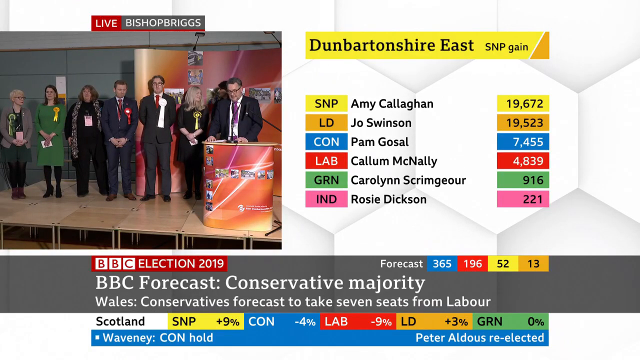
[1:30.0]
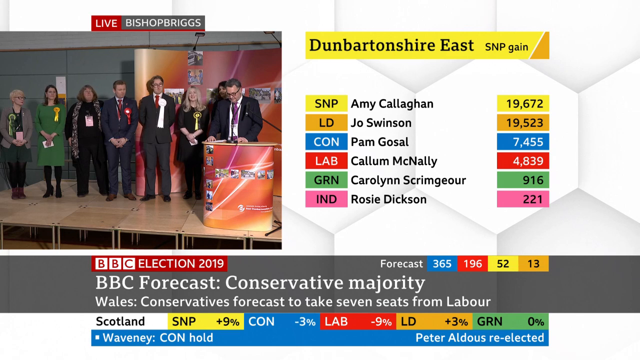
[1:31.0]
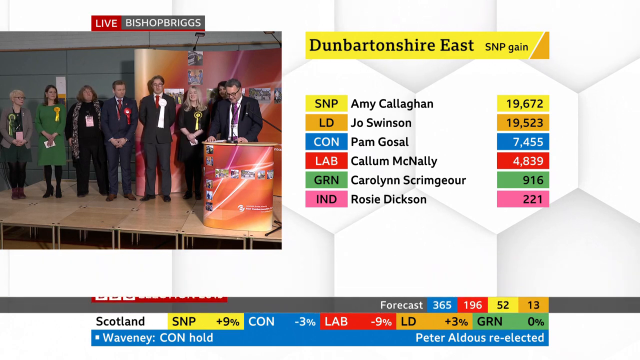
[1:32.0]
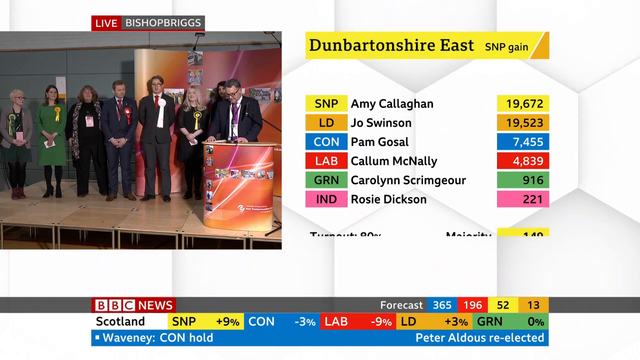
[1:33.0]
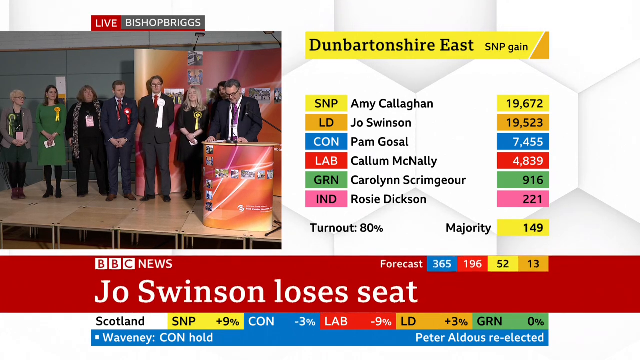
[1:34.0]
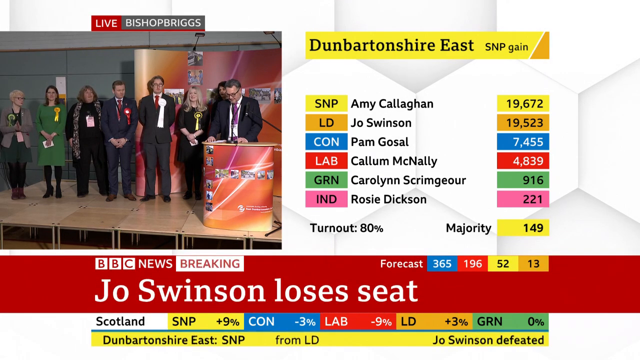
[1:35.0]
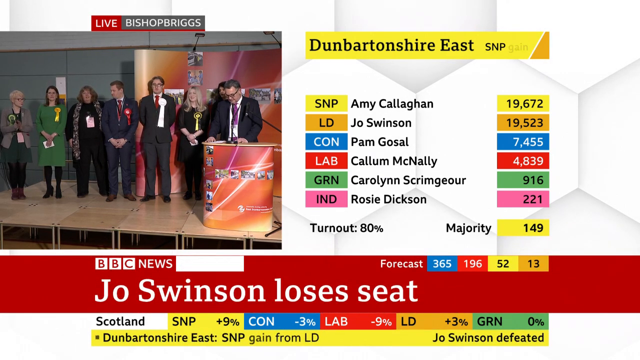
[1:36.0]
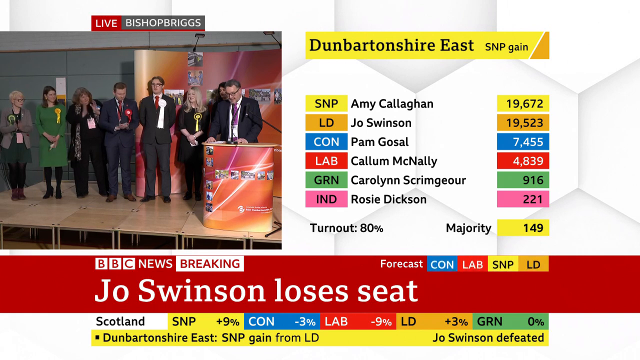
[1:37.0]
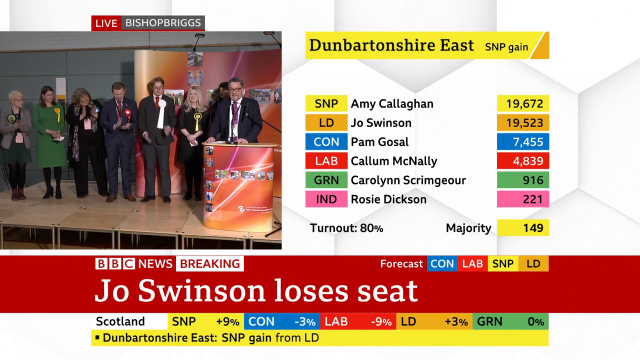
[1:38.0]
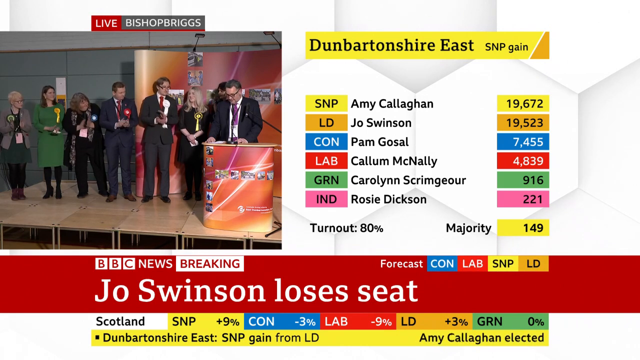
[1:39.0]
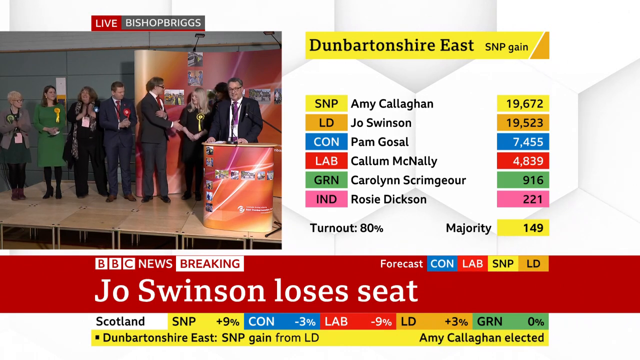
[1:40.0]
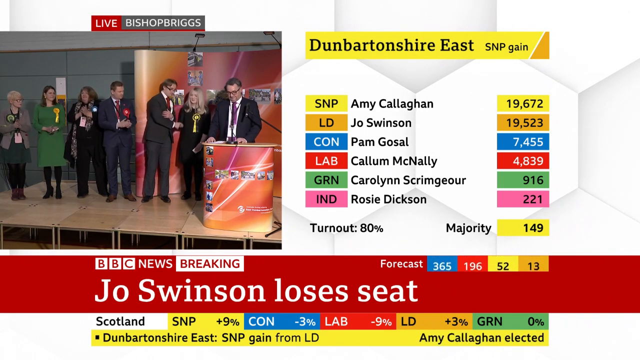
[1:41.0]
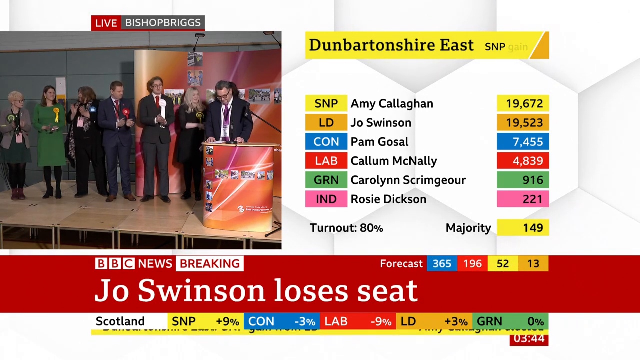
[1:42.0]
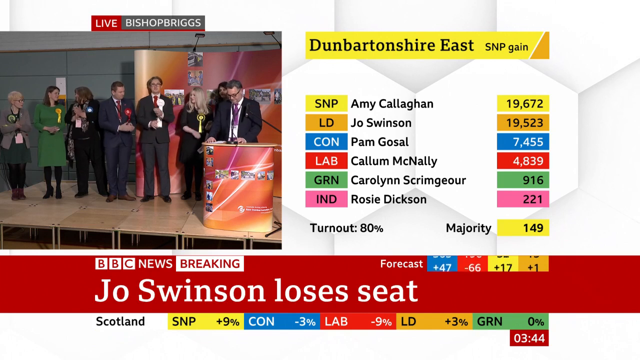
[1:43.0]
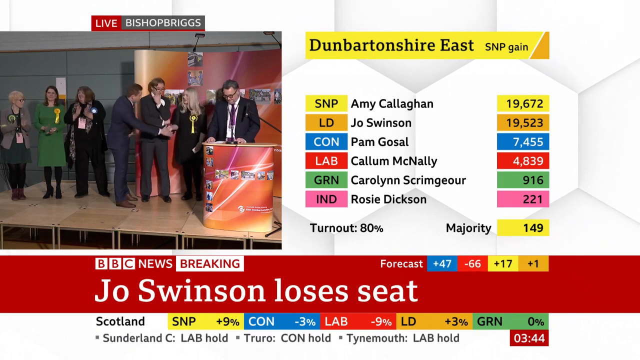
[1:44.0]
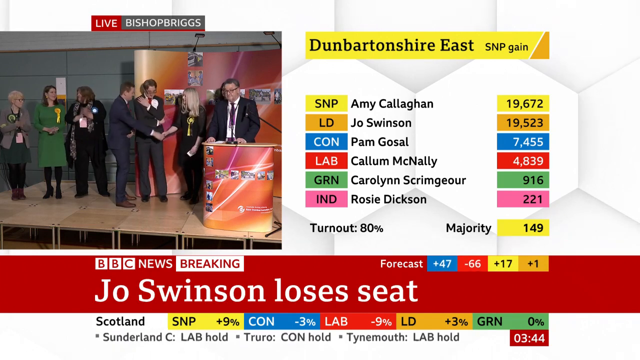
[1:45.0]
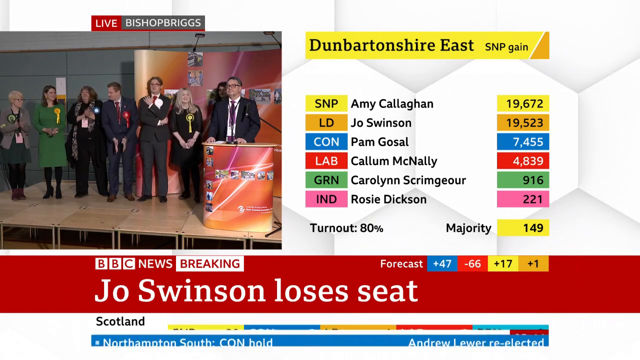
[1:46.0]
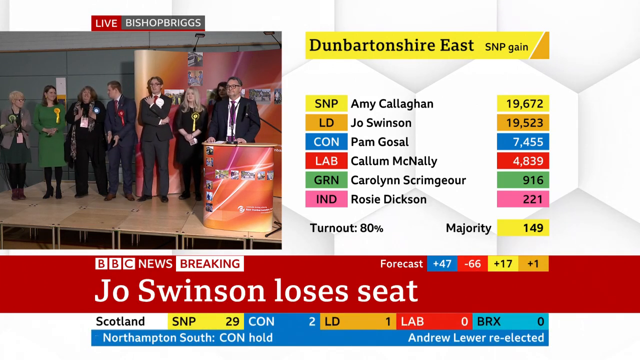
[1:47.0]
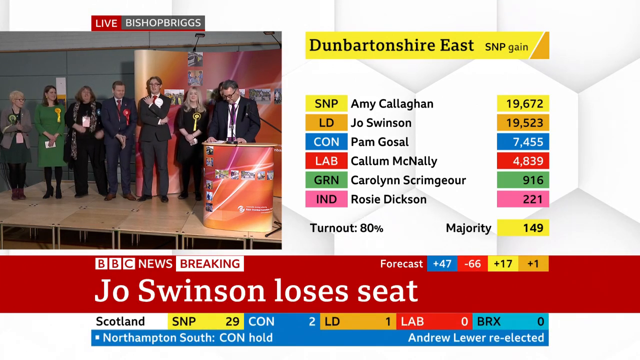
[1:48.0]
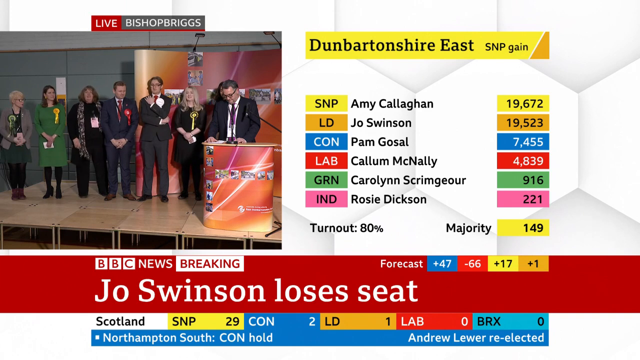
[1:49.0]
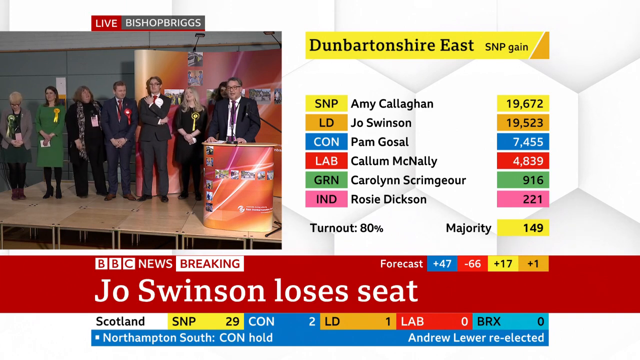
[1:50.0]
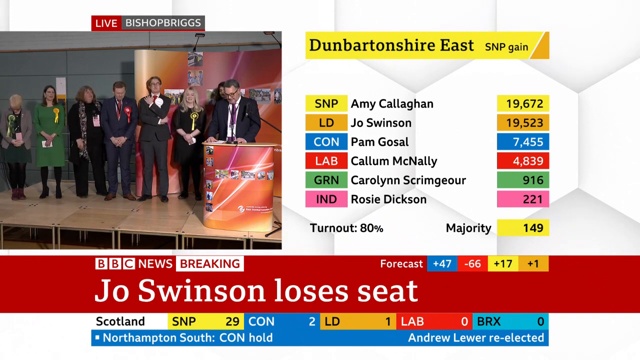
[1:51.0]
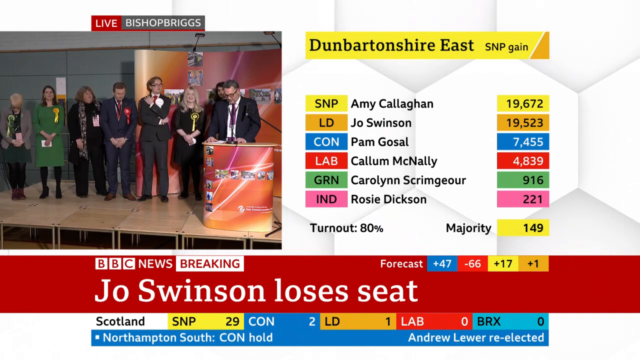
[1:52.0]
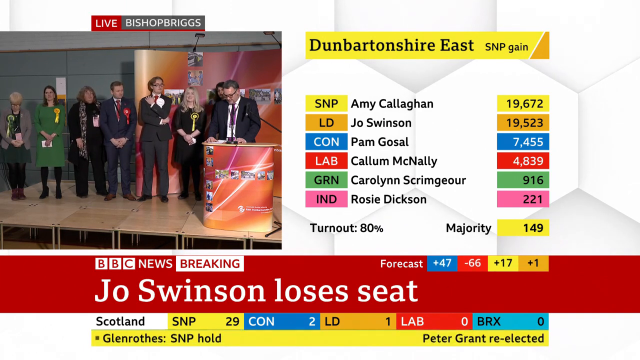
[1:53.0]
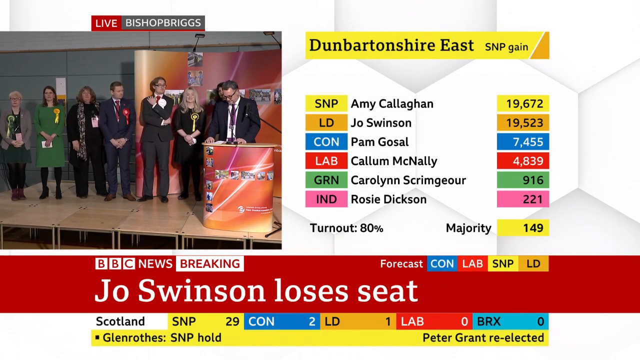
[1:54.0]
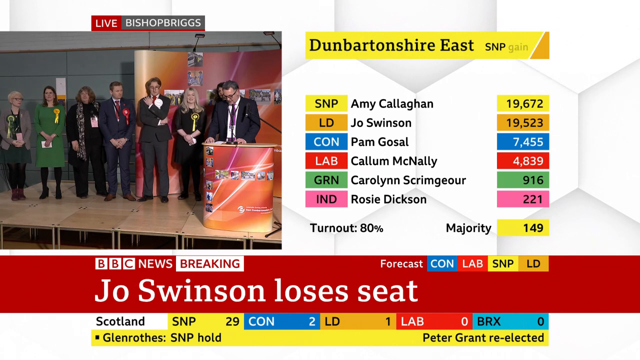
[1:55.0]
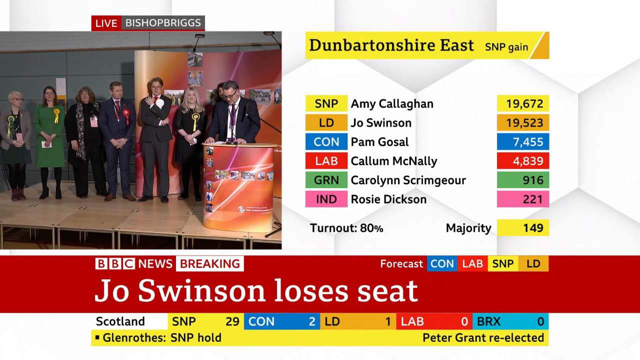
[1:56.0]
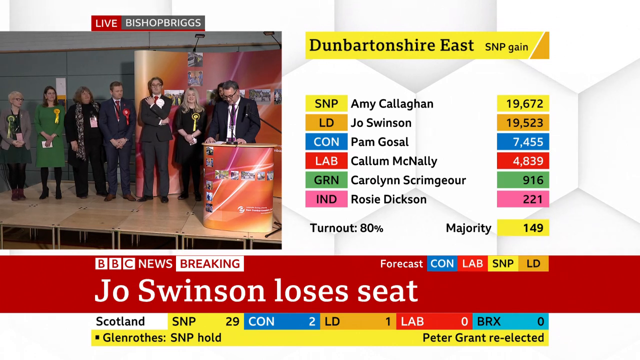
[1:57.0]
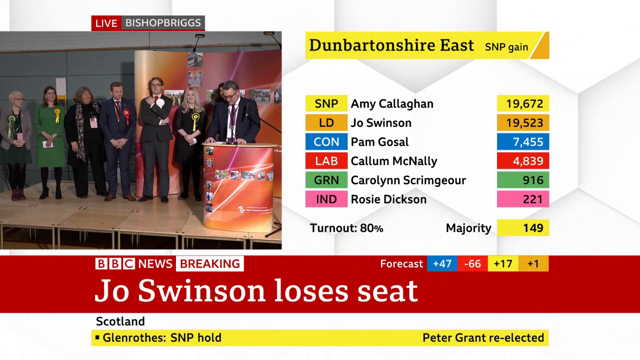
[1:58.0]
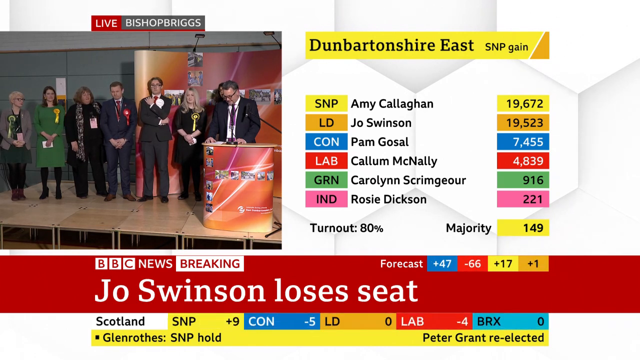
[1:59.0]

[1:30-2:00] At the bottom, beneath everything, the turnout is shown as "80%", and a red banner at the bottom reads "Jo Swinson loses a seat." Above it, the forecast shows the blue square at 365, red at 196, yellow at 52 and gold at 13. This changes to a forecast of blue +47, red -66, yellow +17 and gold +1. Below, text reads "Andrew Lever re-elected" and "Peter Grant re-elected." The results update as the election unfolds. The people stand on the stage, seemingly nervous, to the left of the speaker at the podium, who is likely still speaking. At the bottom, to the right of "Scotland", the figures read "SNP +9 CON -3 LAB -9 LD +3 GRN 0."